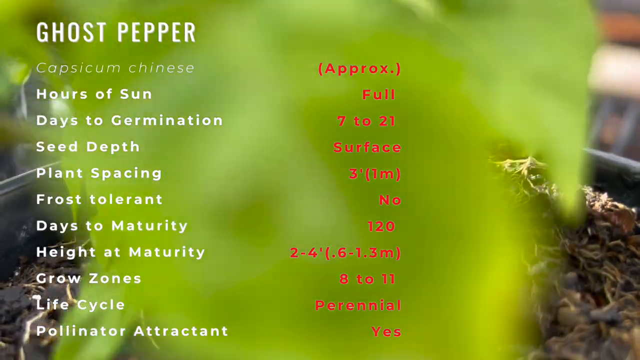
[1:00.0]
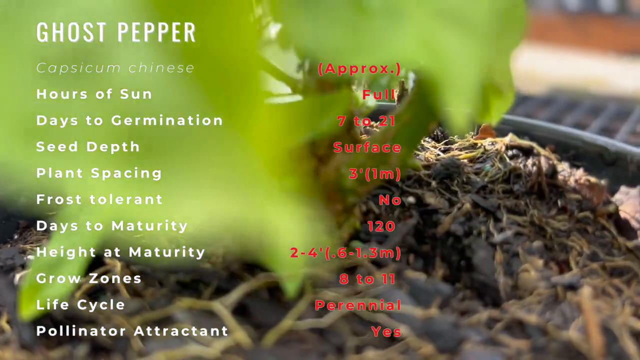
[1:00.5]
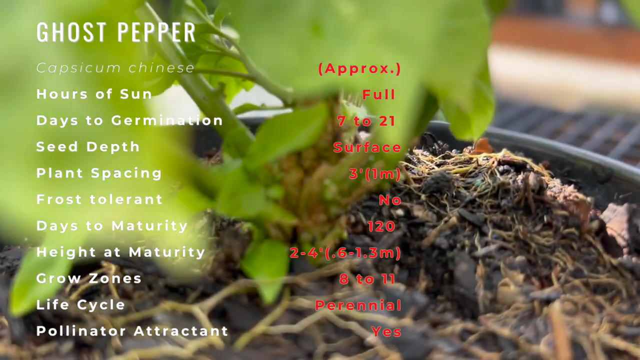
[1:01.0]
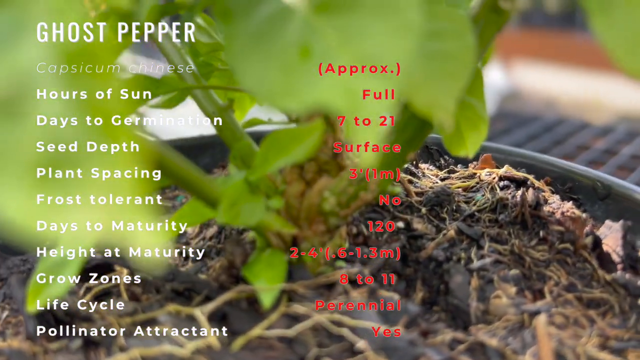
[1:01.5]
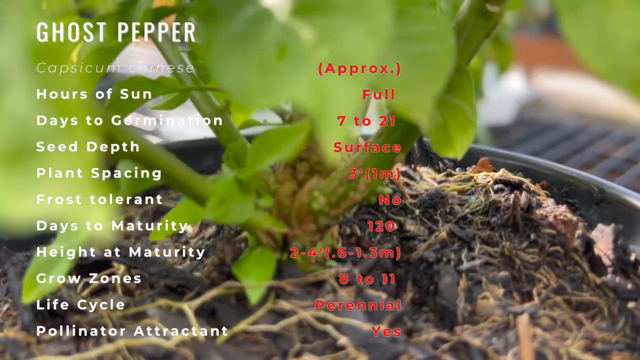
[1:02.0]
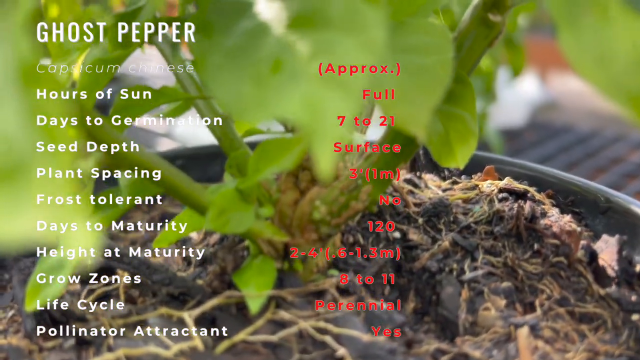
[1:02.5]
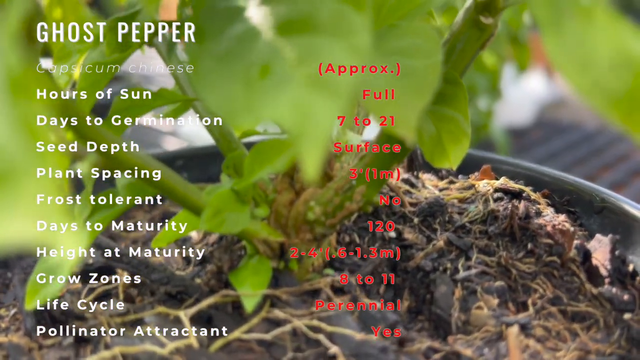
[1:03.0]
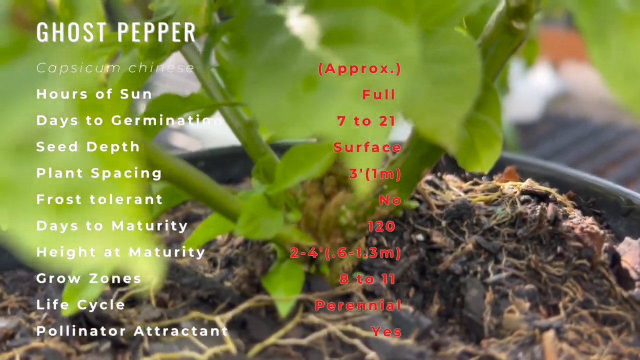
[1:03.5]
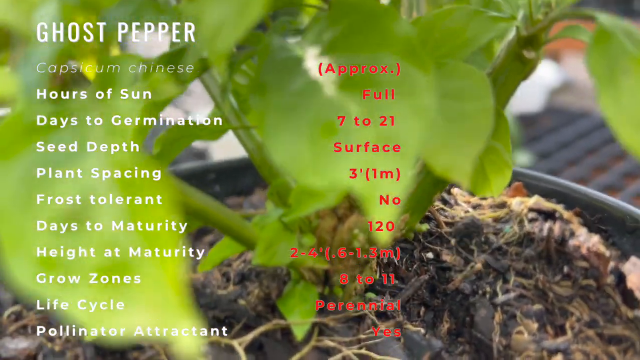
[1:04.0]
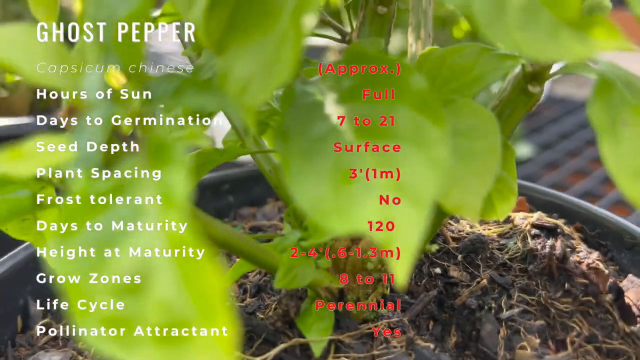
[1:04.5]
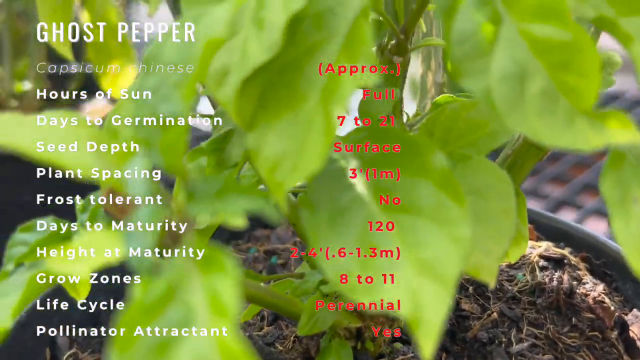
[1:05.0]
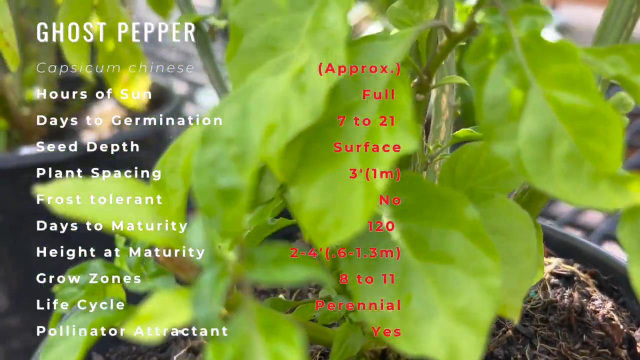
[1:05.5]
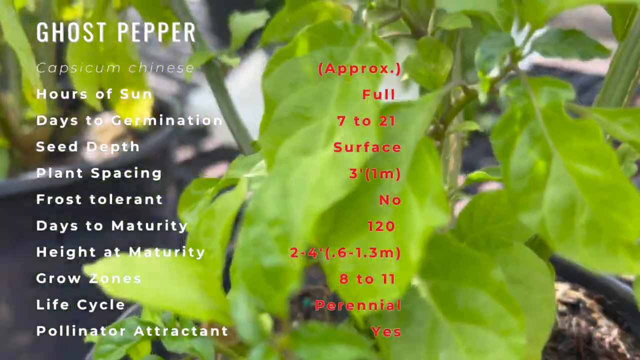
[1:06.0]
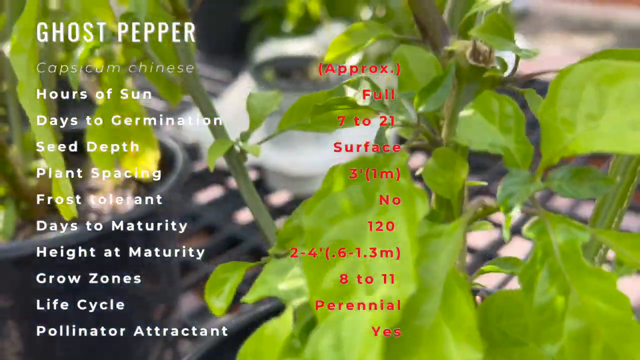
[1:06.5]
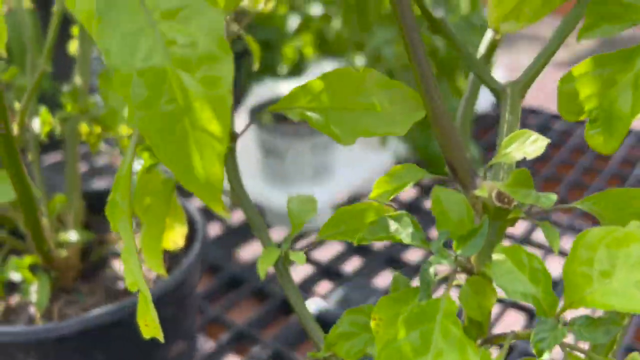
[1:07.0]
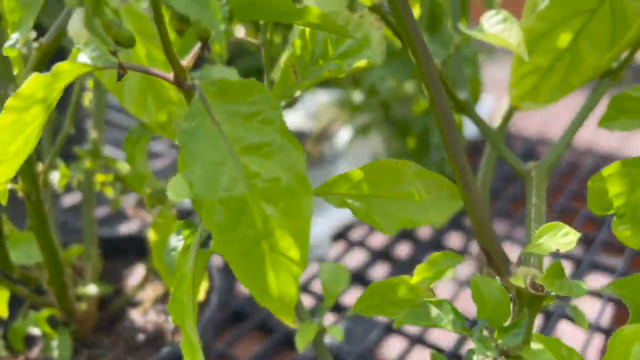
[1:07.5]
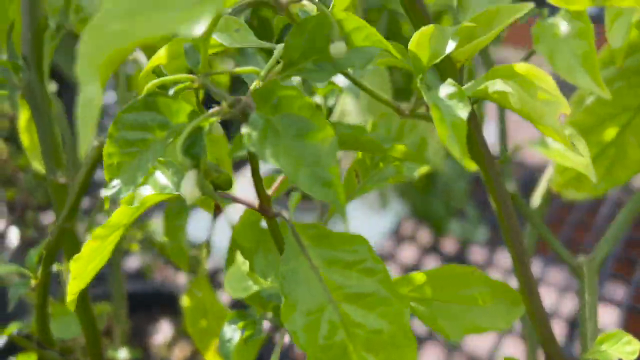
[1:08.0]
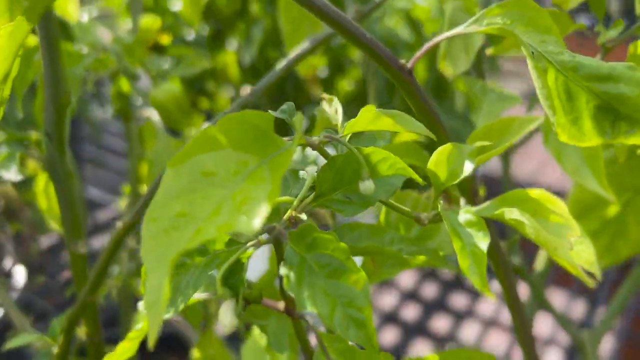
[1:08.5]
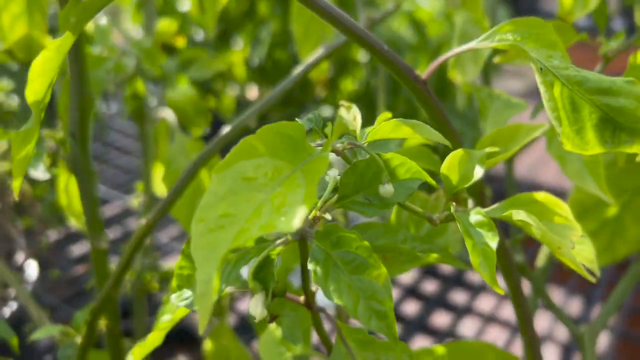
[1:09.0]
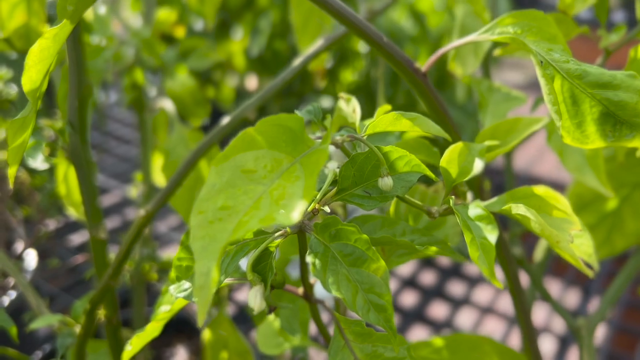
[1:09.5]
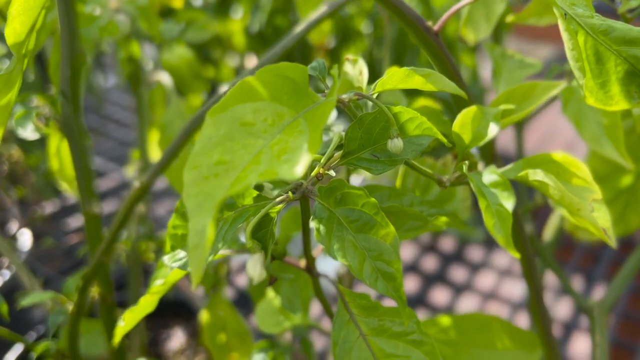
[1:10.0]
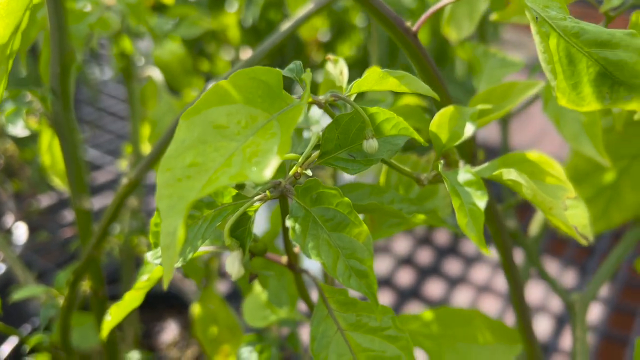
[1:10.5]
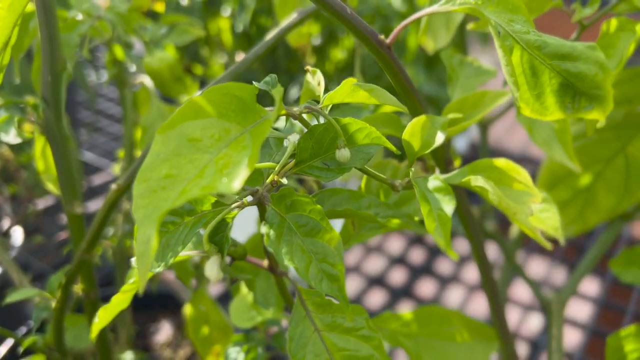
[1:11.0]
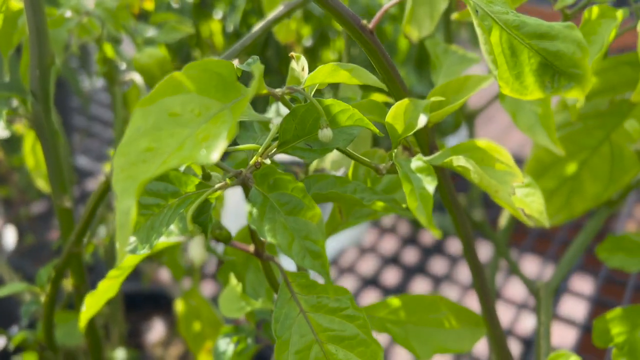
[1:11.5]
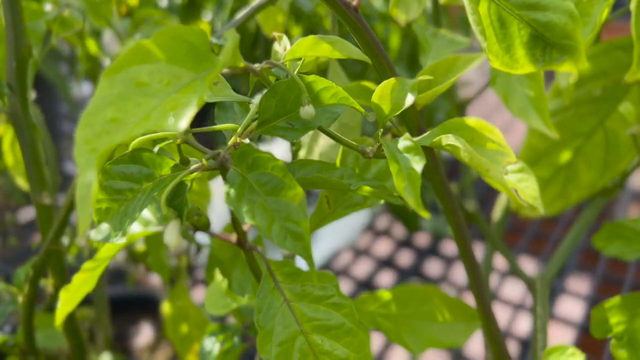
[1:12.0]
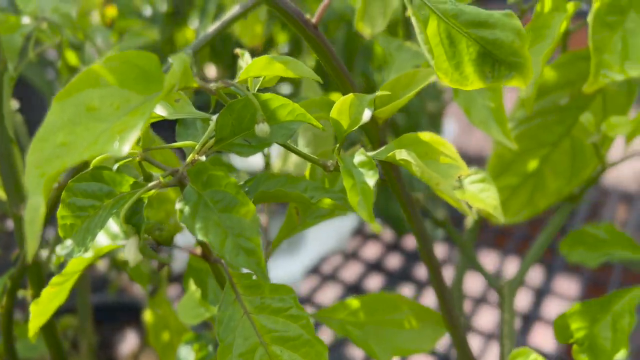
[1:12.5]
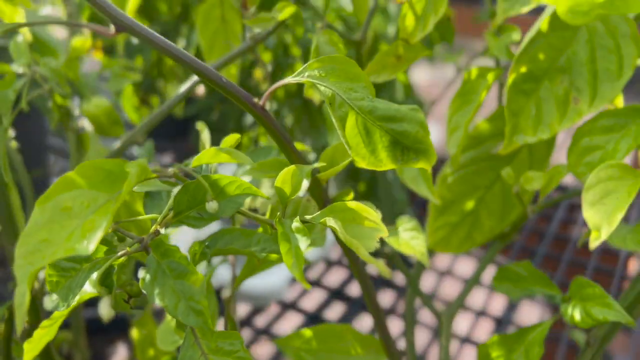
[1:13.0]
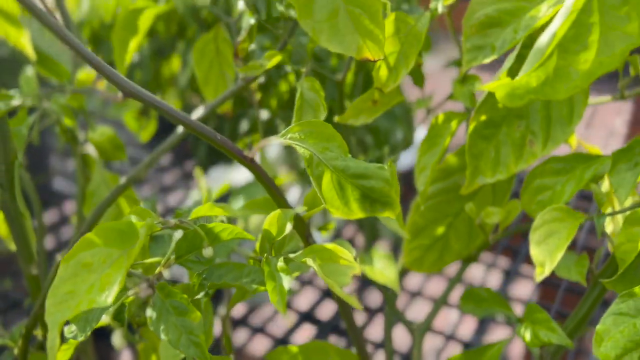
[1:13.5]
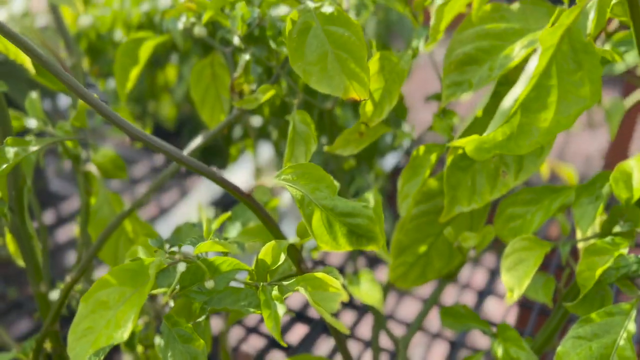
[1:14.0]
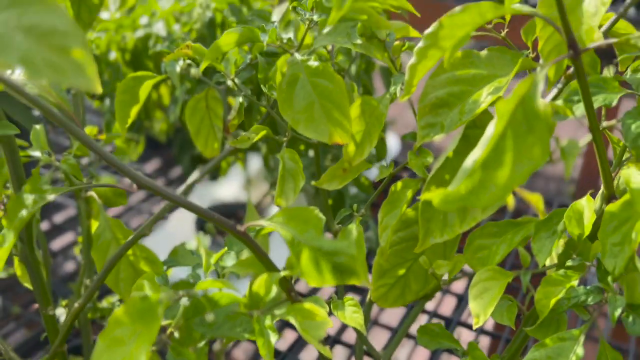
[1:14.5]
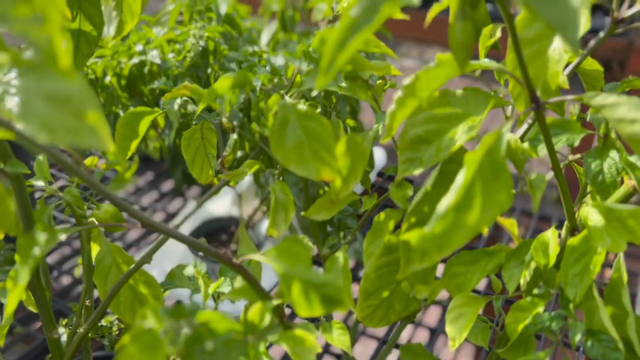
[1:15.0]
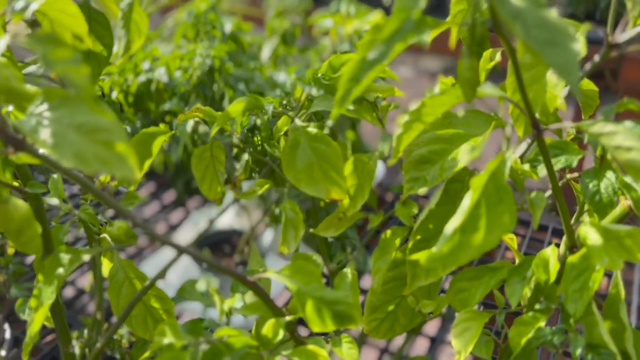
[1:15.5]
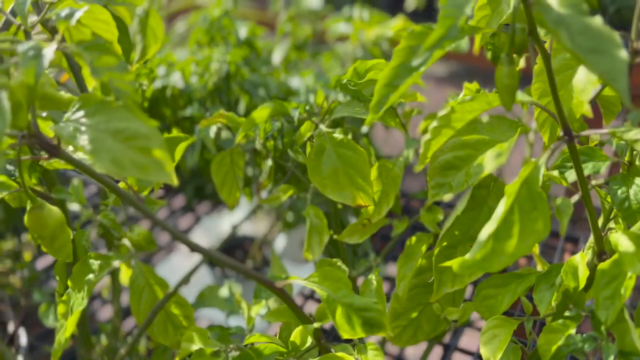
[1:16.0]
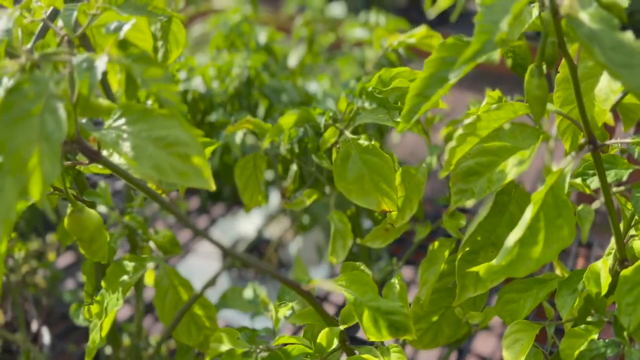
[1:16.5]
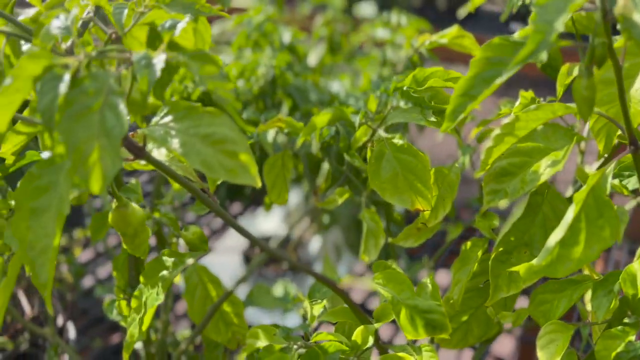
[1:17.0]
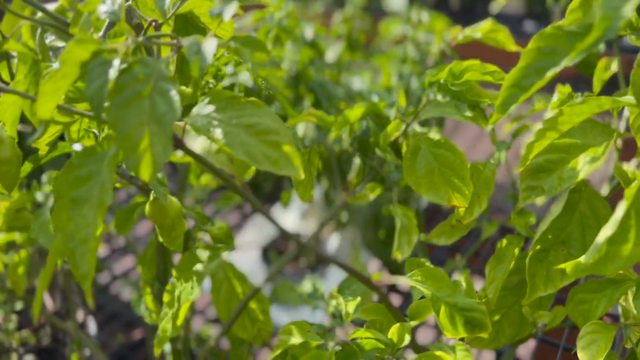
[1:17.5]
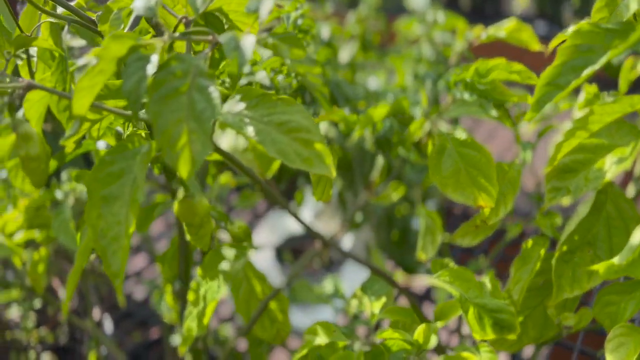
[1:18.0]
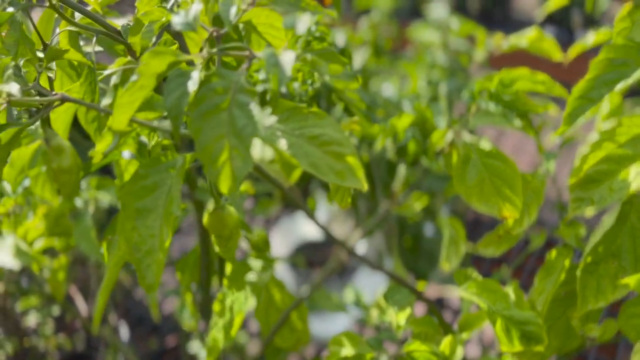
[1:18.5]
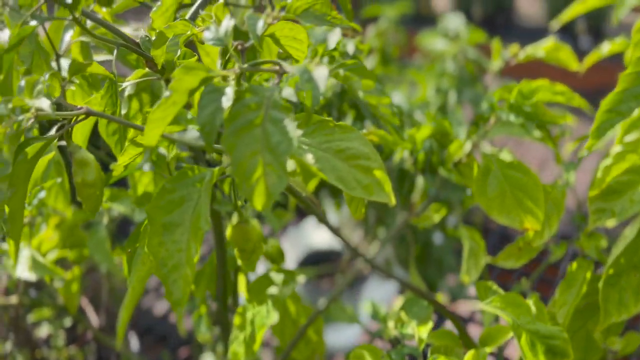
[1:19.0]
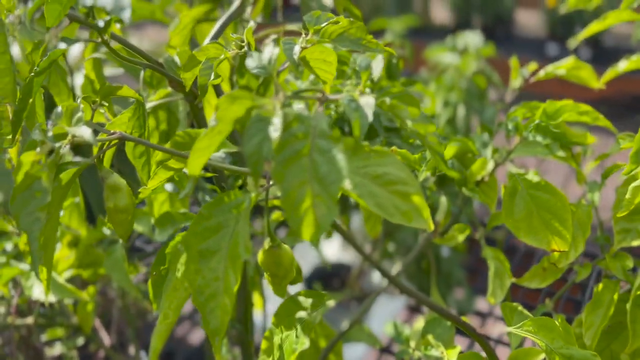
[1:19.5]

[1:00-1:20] A very green plant in a pot is shown, with two columns of writing in the foreground: white font on the left and red font on the right. The left side identifies the plant as a ghost pepper plant, and the text gives the information required to grow one. The camera then goes up the plant in a very close view of the leaves and branches. The leaves are very green and the branches are brownish gray. Some of the leaves have little stems coming off them with a little white bud at the end, and another little stem has a green pepper at its end, the same color as the leaves and not ripe yet.